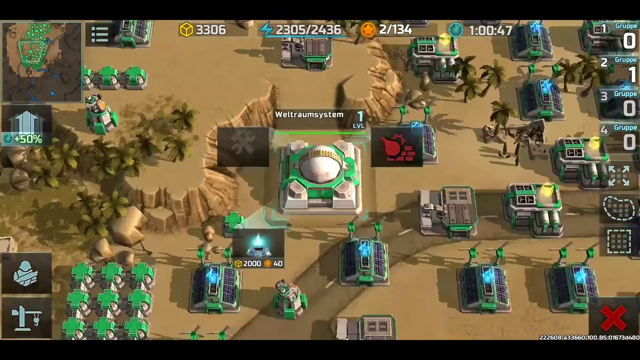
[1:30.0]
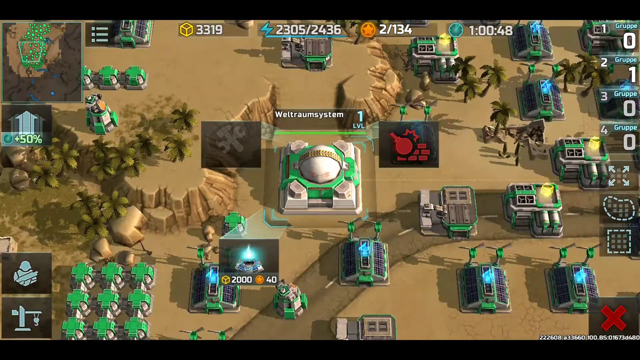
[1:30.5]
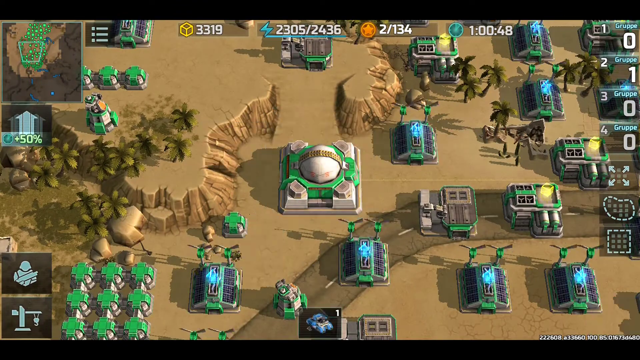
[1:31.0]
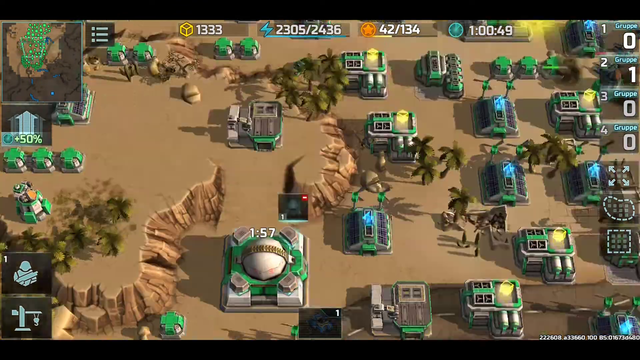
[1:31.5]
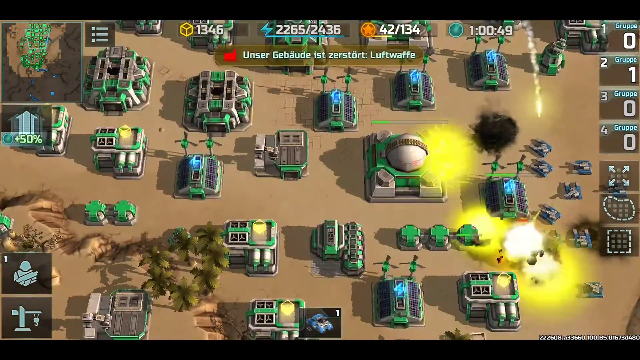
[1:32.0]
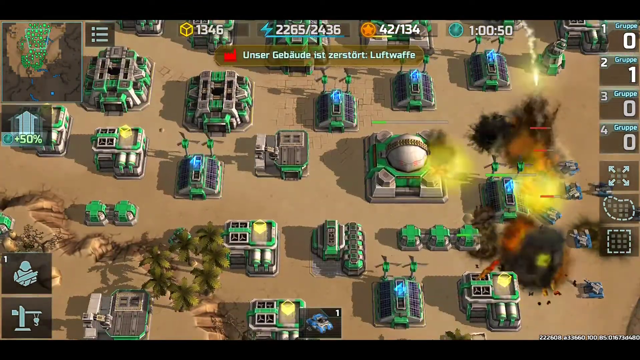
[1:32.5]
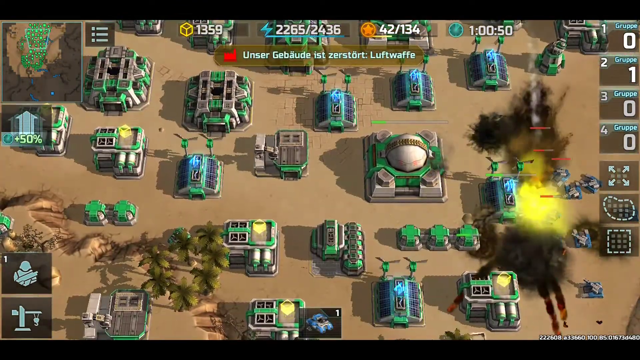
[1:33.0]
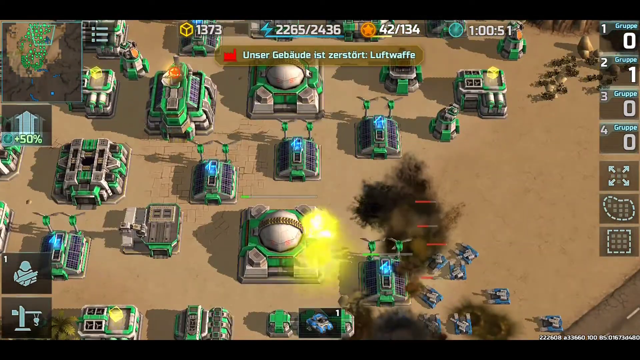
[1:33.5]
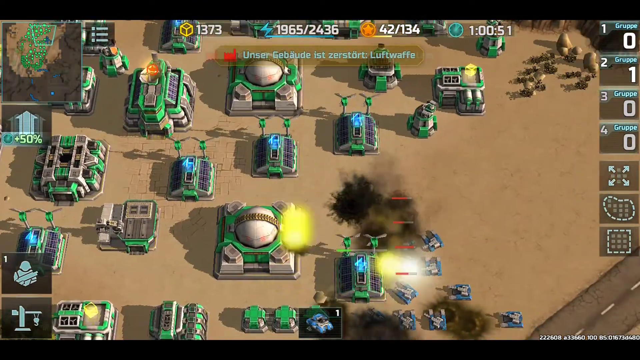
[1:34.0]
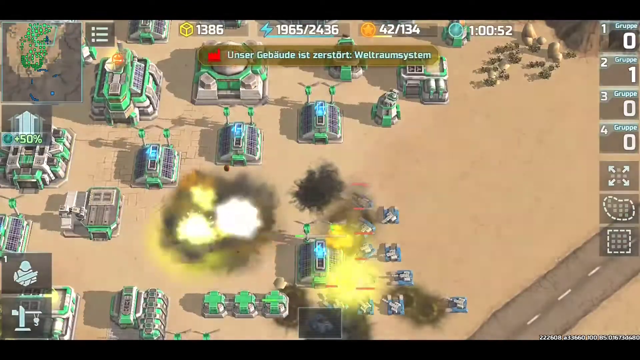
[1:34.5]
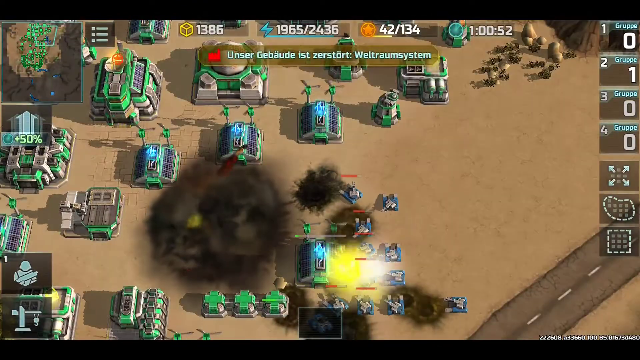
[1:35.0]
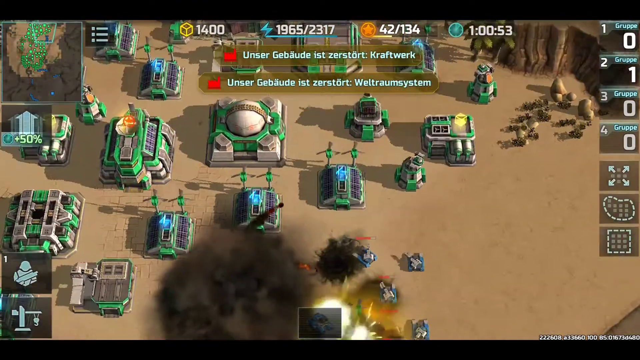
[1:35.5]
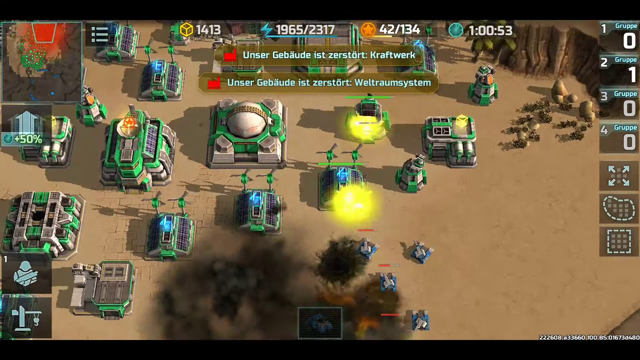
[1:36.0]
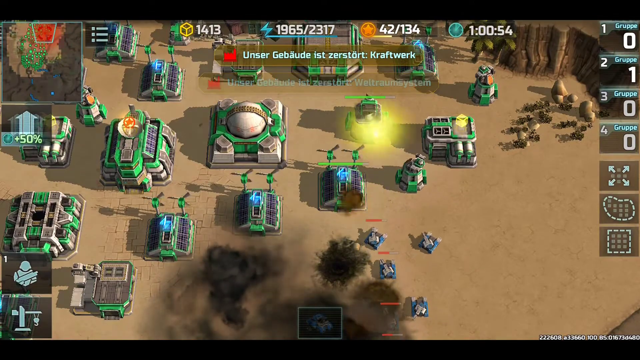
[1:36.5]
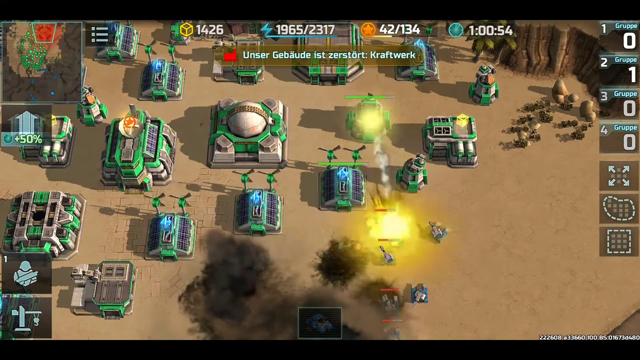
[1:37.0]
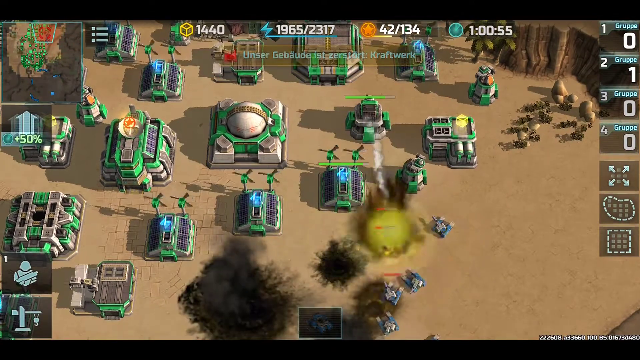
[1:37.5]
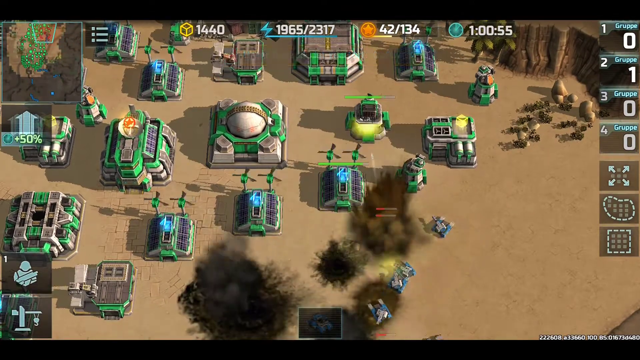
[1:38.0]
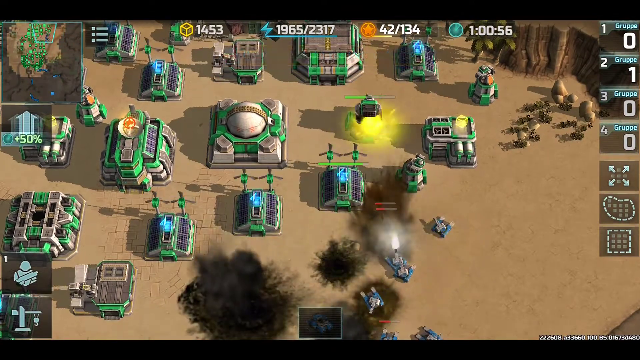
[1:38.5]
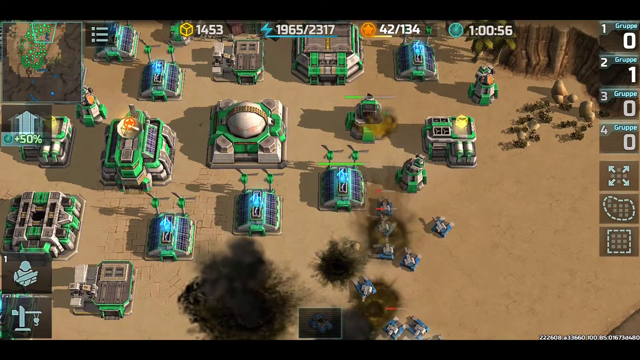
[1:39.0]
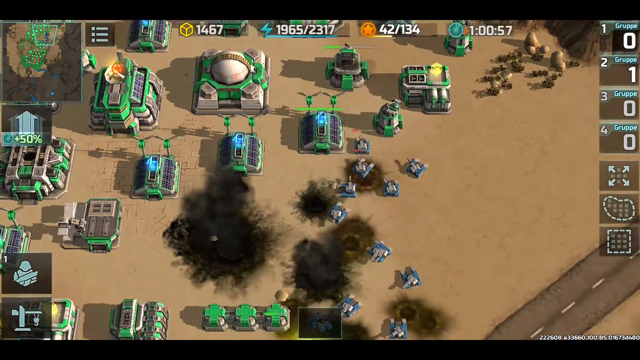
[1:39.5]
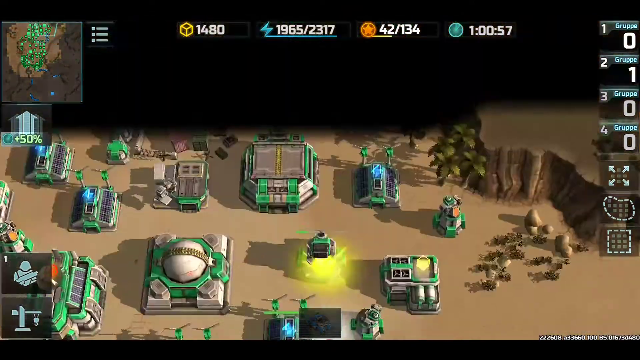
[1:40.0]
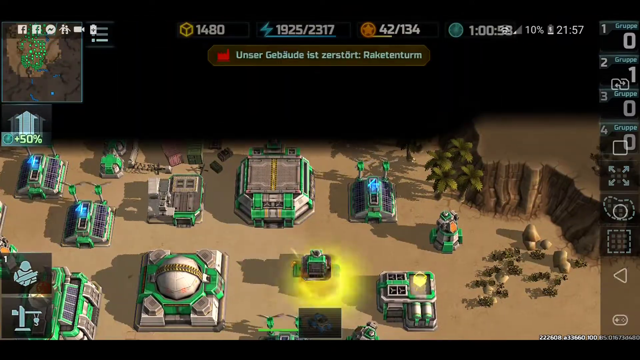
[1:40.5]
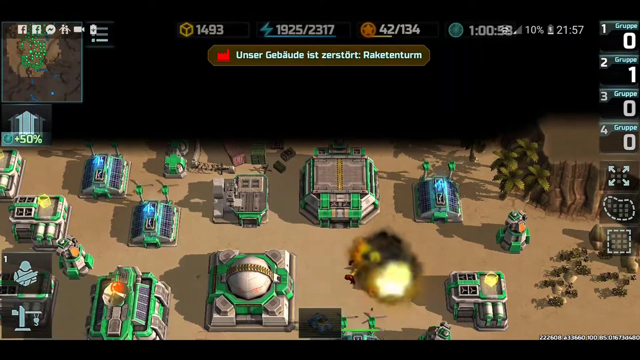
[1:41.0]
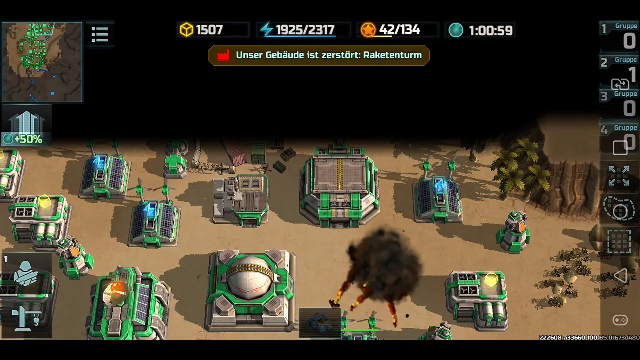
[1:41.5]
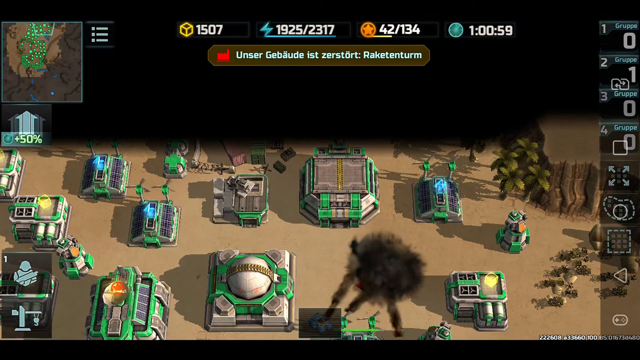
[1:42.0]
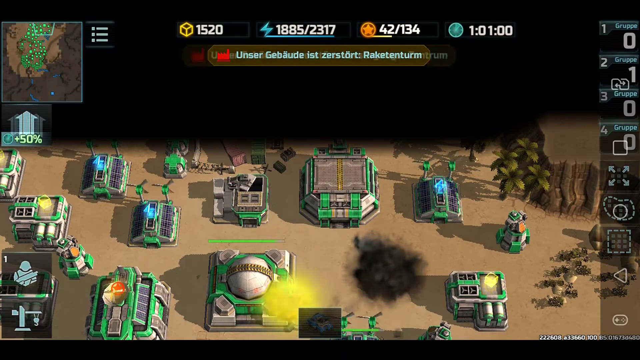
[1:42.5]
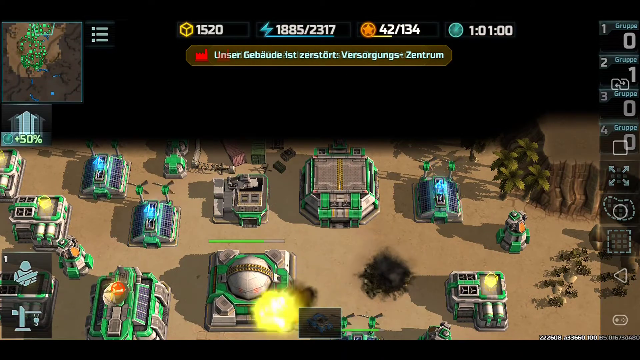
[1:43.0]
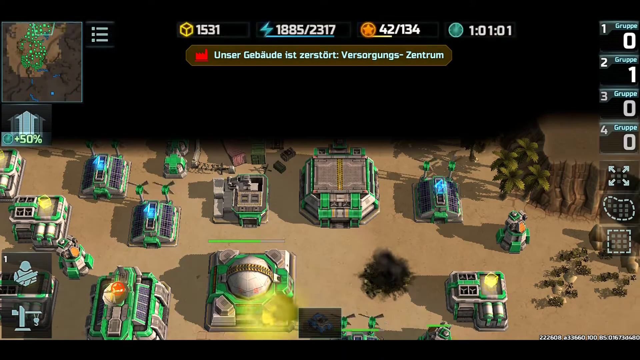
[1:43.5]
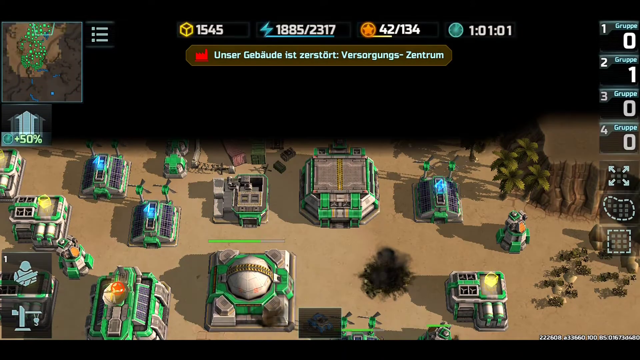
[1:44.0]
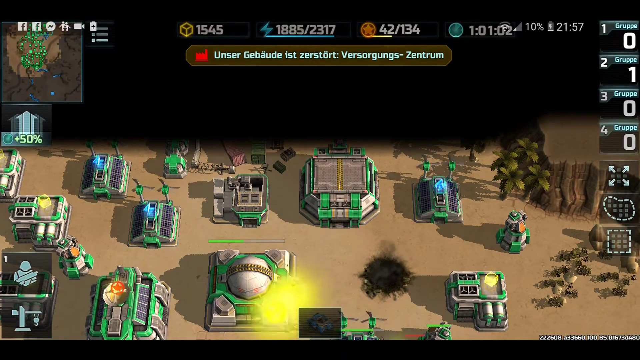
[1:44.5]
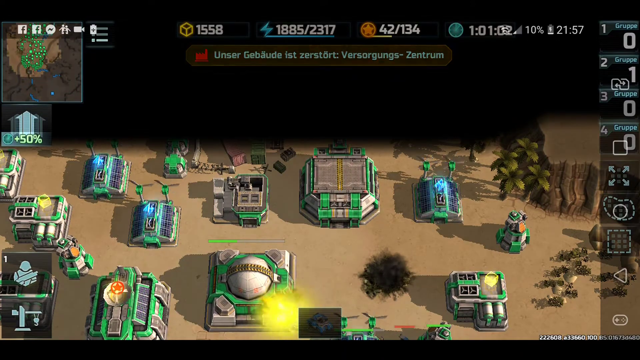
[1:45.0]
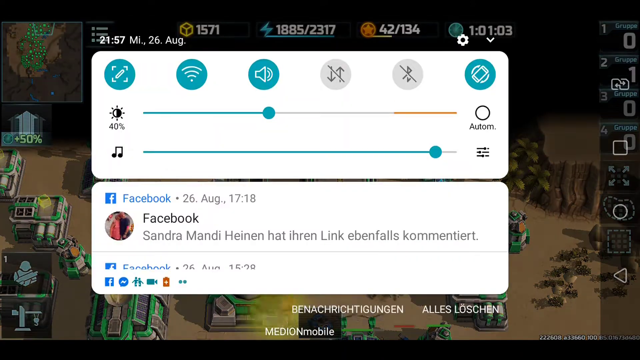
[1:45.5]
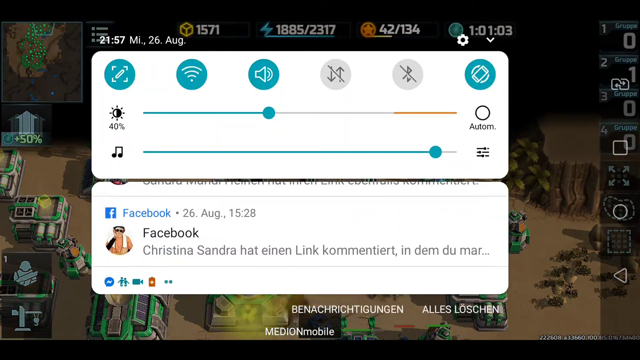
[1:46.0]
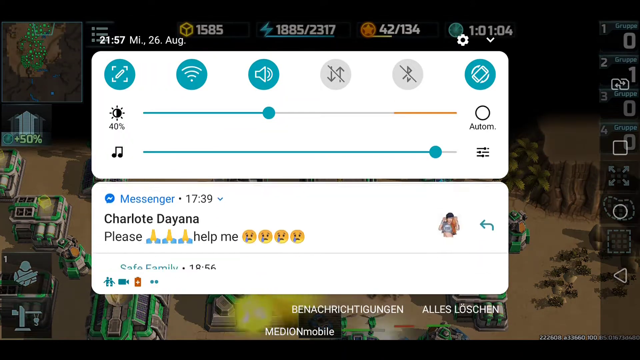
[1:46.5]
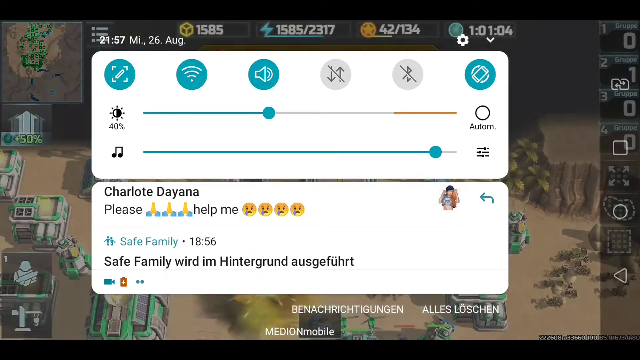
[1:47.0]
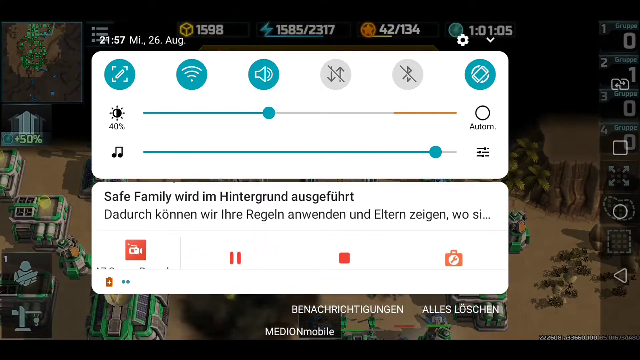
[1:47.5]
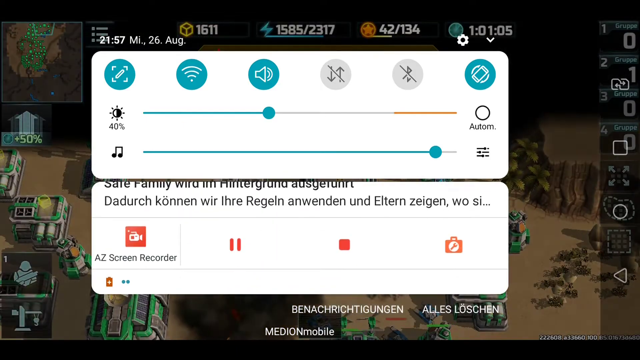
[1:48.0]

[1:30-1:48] The video game shows a battle. There are structures that look like they have windmills on top, turning. There are massive explosions, some yellow and some black. A Facebook pop-up appears with people making comments. There is constant war activity, with ammunition being shot, all kinds of explosions and exchanges of gunfire. The Facebook pop-up appears again and then disappears. There are scores up top, and what is apparently a time-lapse clock in the upper right-hand corner. There are zeros and a one, labeled one through four, each with a score. In the lower left-hand corner there is a picture of an army soldier. The terrain is mountainous, with a road and a few trees that look like they may be palm trees. It is very sandy, and the terrain is all brown.